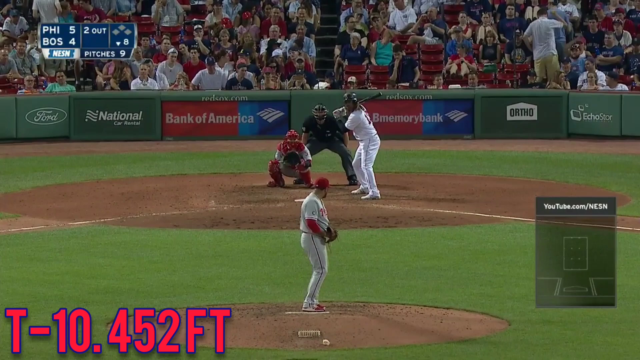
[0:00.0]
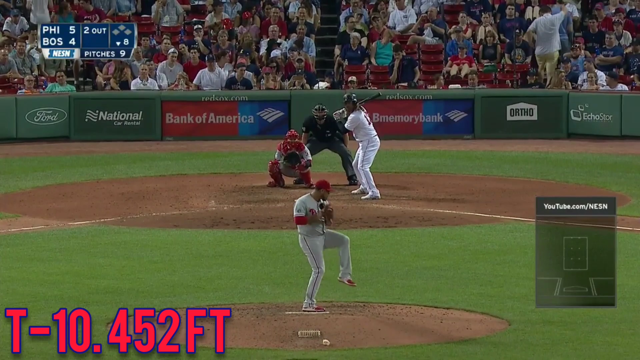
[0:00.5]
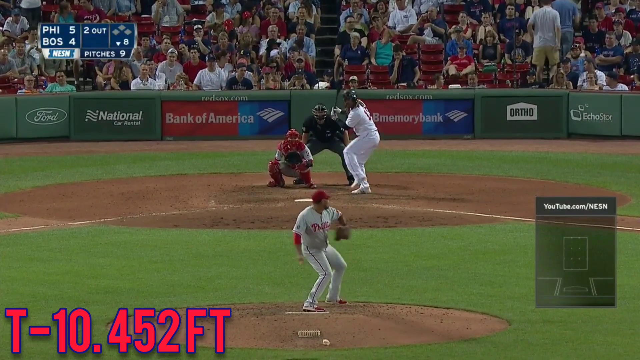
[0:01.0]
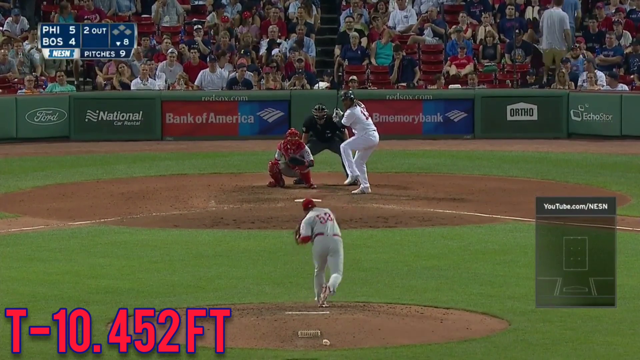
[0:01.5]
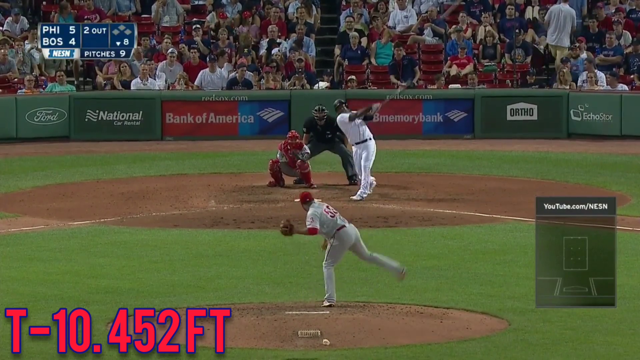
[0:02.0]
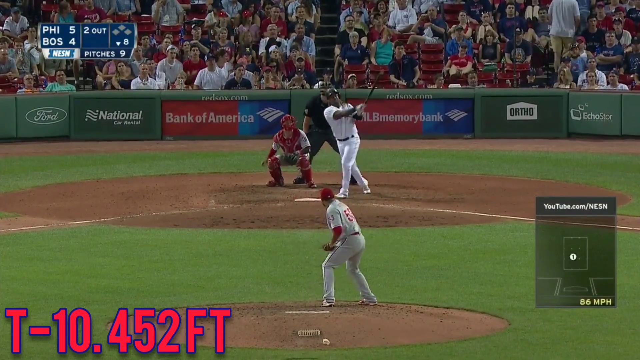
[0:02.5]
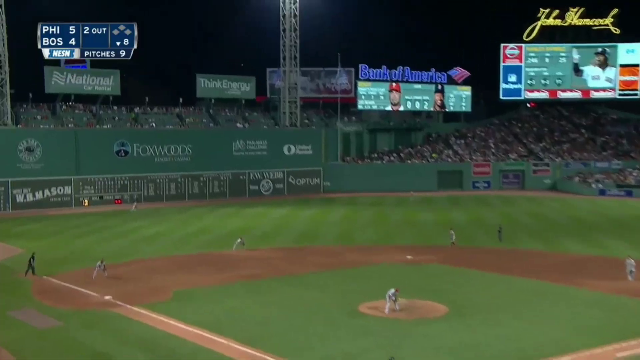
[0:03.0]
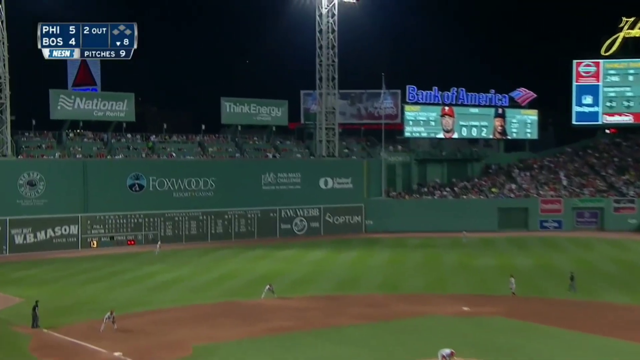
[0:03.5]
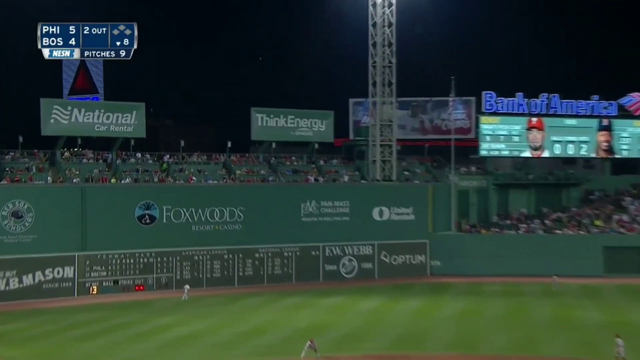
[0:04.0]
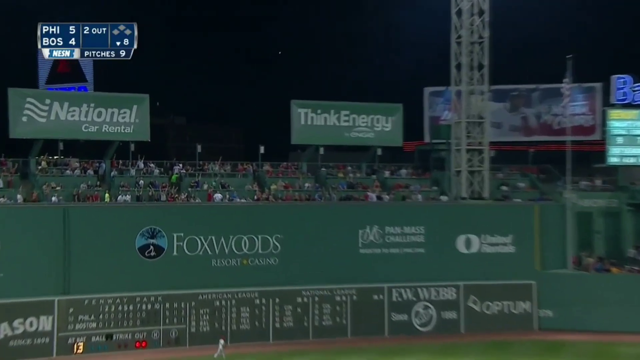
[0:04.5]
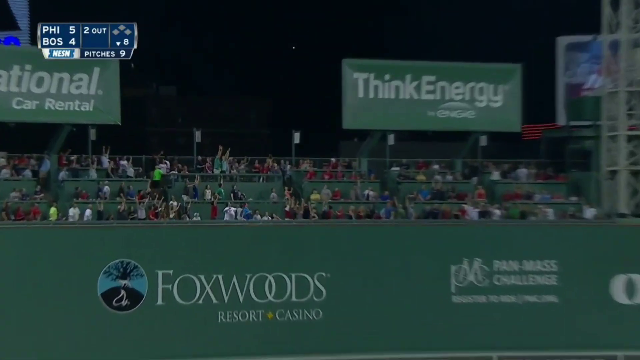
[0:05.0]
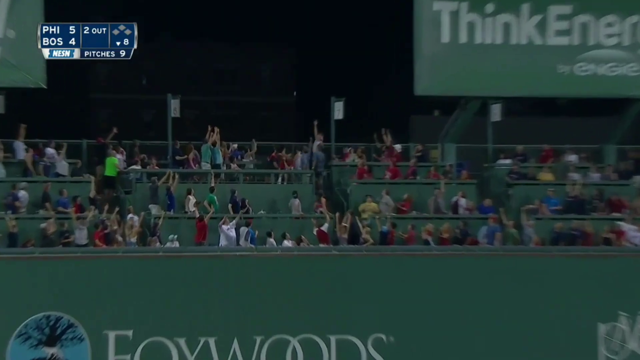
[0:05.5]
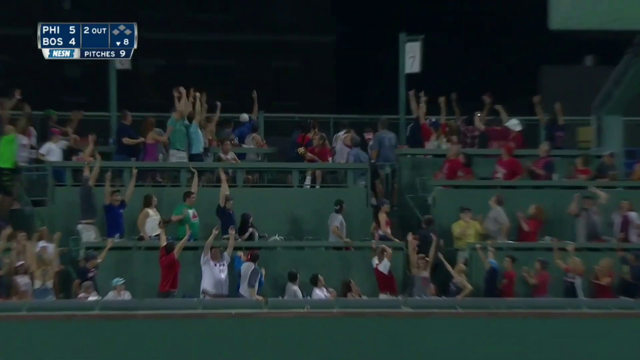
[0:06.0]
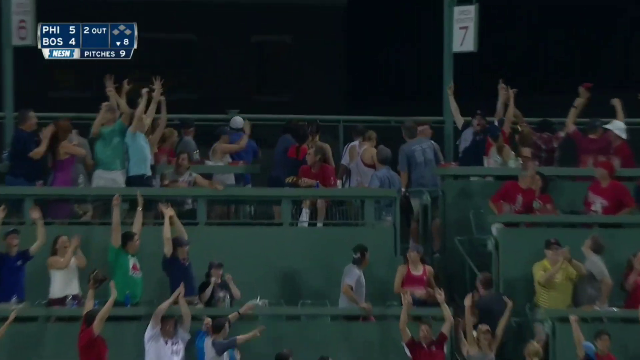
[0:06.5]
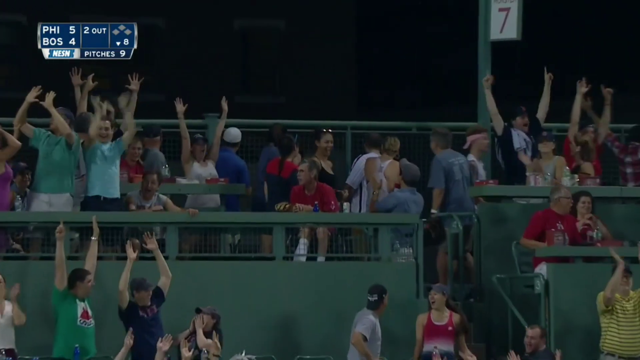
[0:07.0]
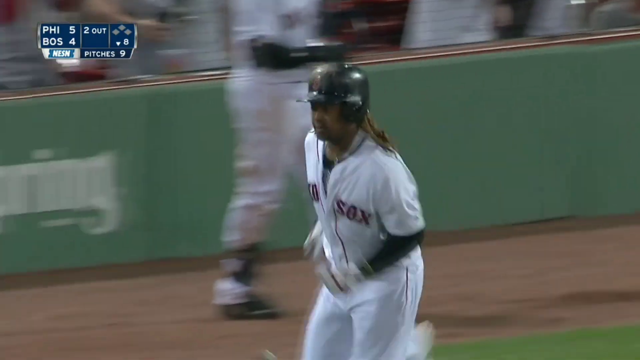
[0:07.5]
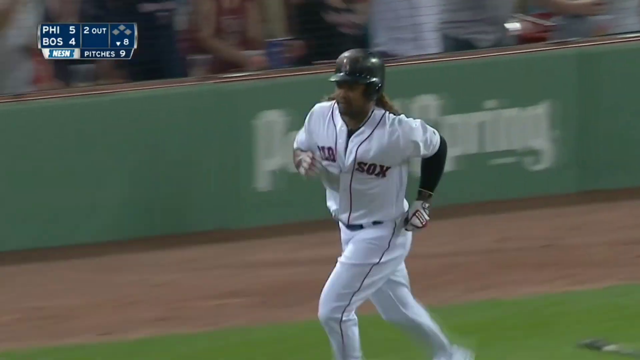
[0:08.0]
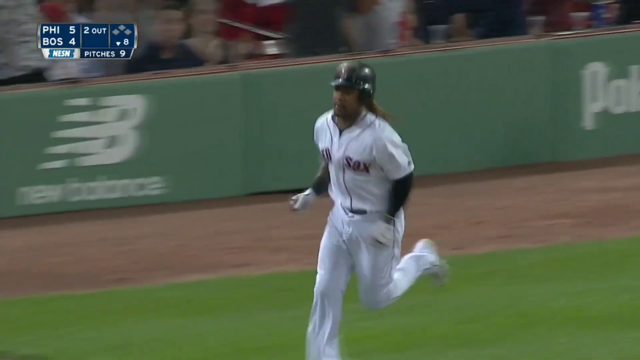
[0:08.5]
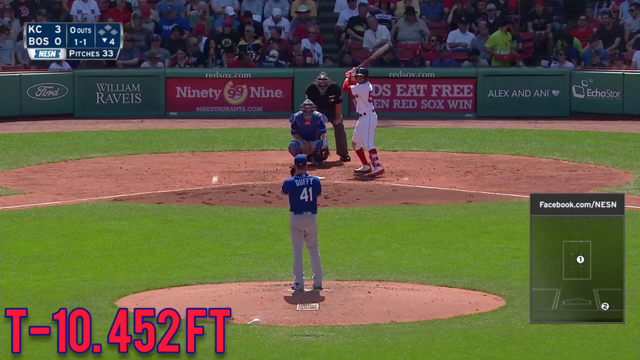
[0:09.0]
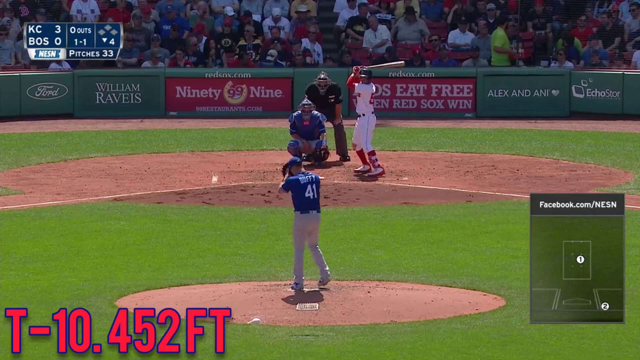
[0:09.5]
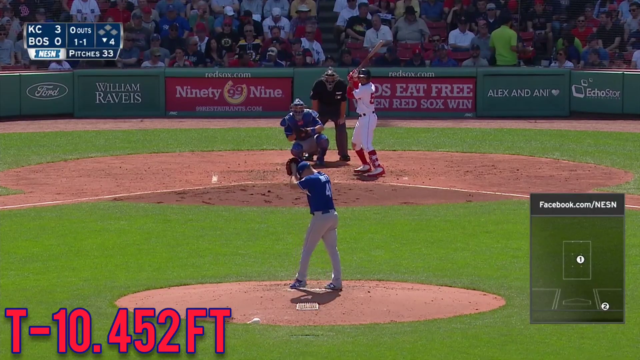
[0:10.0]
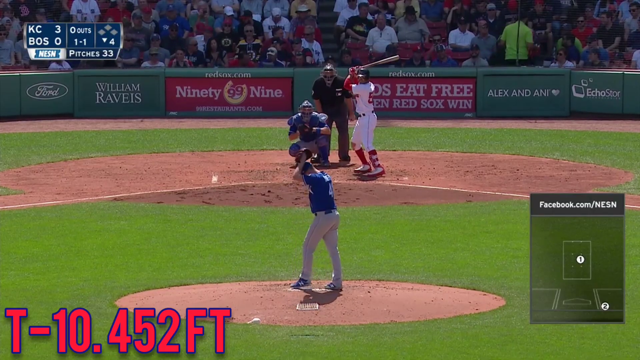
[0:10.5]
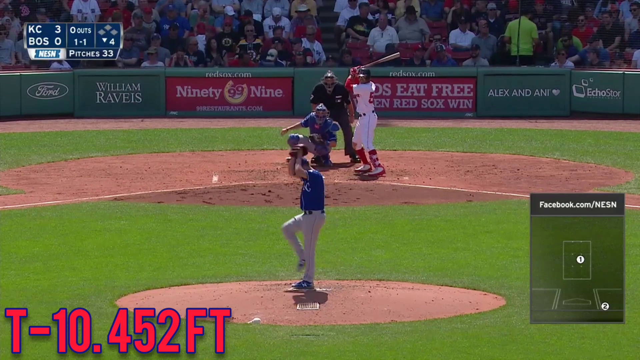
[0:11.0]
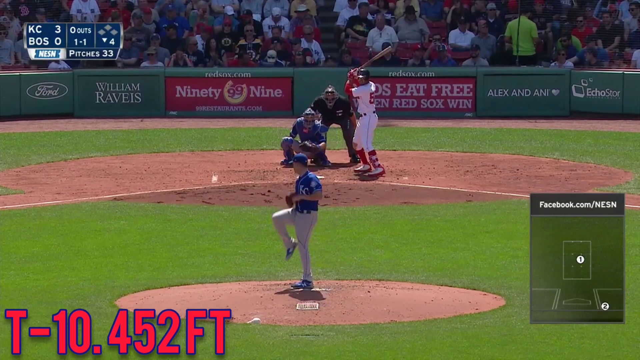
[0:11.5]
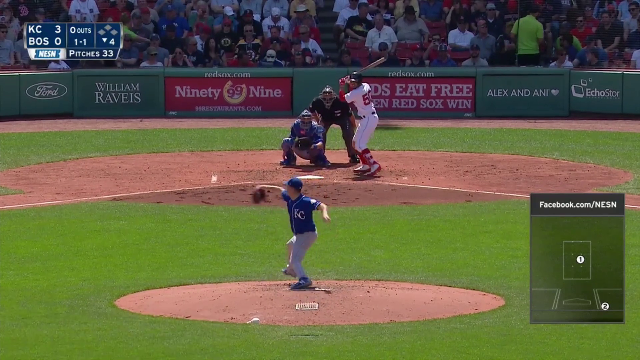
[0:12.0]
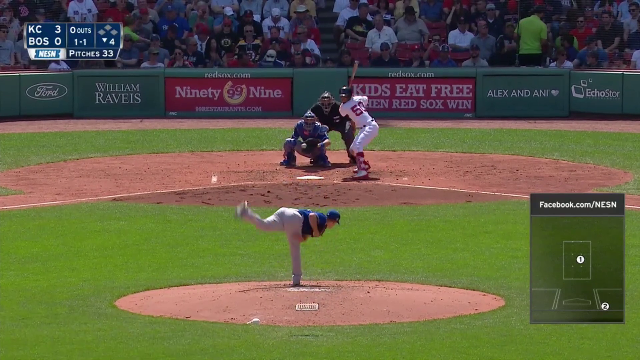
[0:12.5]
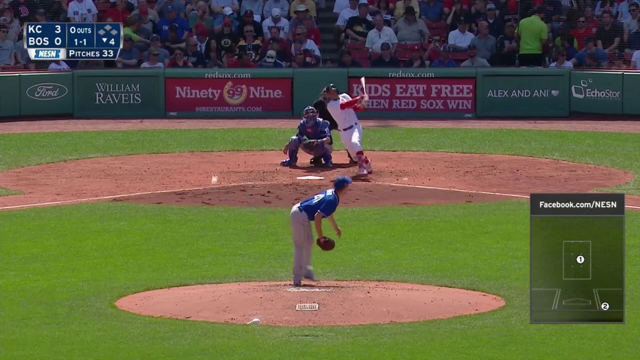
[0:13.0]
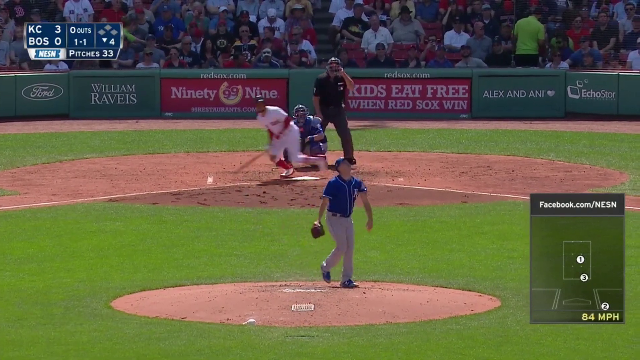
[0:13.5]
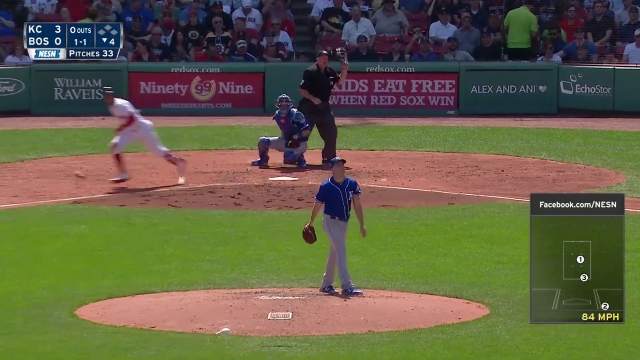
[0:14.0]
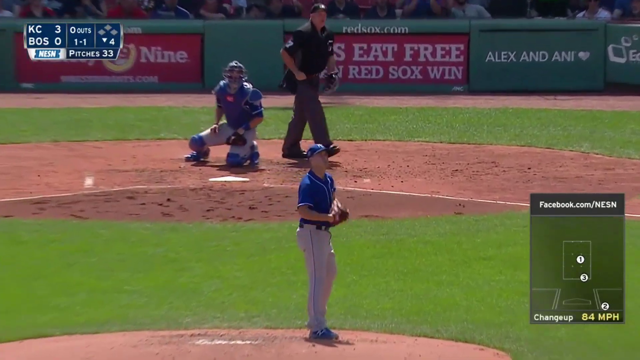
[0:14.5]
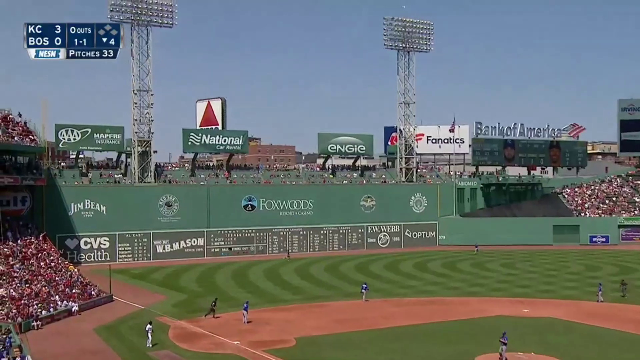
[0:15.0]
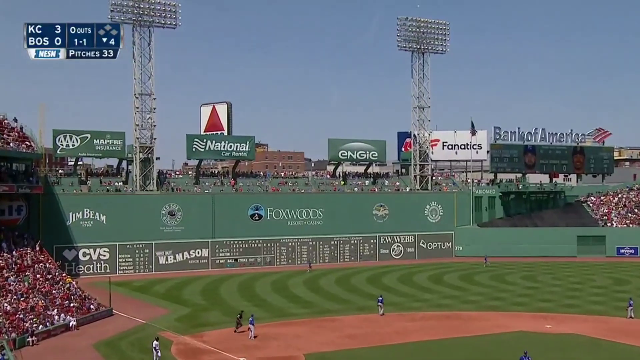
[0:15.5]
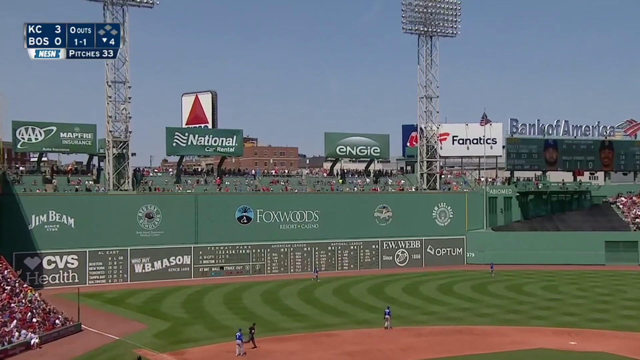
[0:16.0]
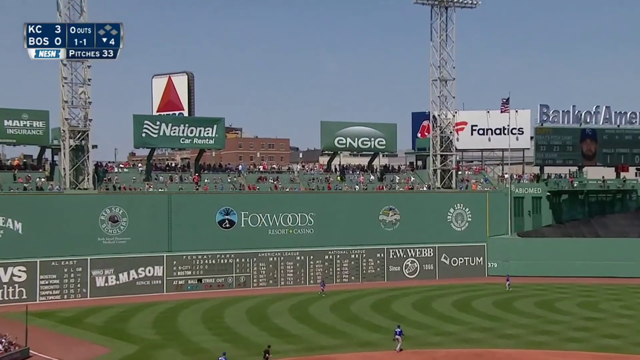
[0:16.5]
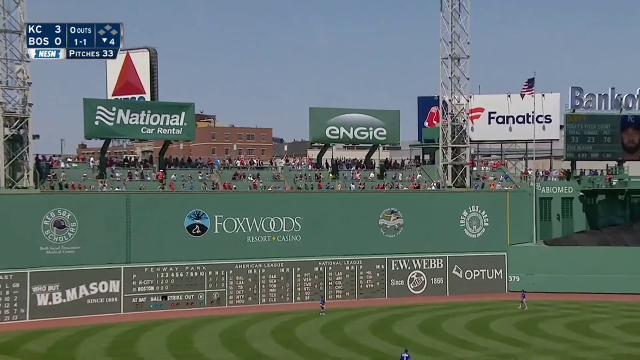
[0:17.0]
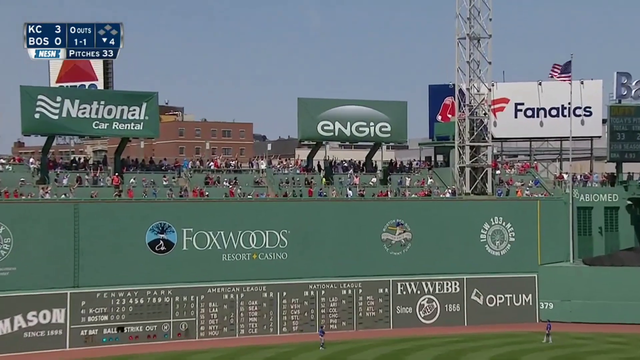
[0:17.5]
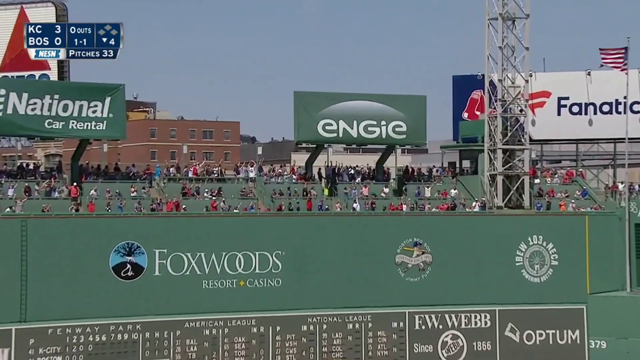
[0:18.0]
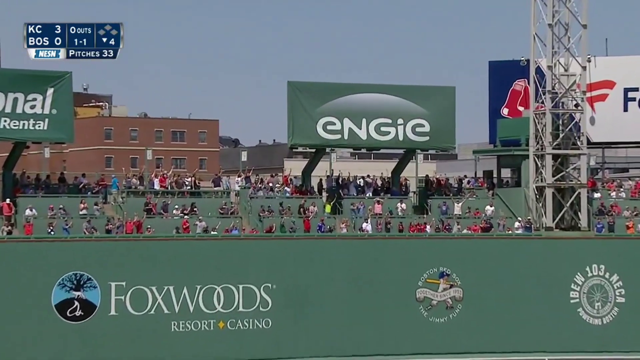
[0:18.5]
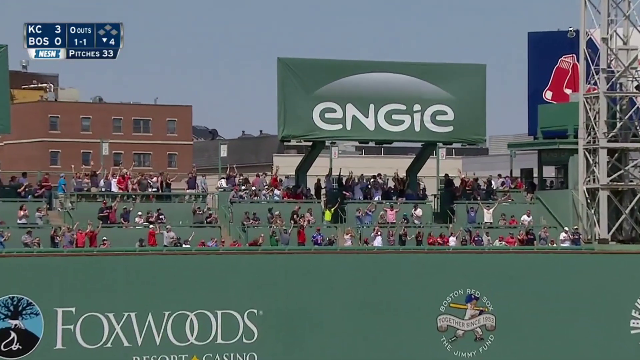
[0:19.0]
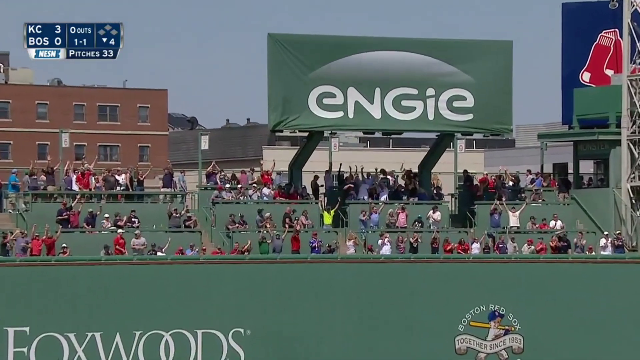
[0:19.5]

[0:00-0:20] The view is from the center field camera at a baseball game. A pitcher in a red-highlighted uniform for the Philadelphia Phillies is set and ready to pitch, and a right-handed batter stands at the plate. The stands in the background look full. Advertisements on the fence behind the umpire are for Ford, National Car Rental, Bank of America, Ortho, and Echo Star. It is the bottom of the eighth inning, and a Phillies relief pitcher who has thrown only nine pitches is in the game. The score is Phillies 5, Boston Red Sox 4, which suggests the ballpark is Fenway Park in Boston. The right-hander delivers, and the pitch is hit high into left center and goes over the Green Monster in left field for a home run by the Boston hitter. The scene then changes to the bottom of the fourth at Fenway, with the Red Sox playing the Kansas City Royals and losing 3-0. The count is one-one with no outs. The Royals' left-hander delivers a fastball that is hit hard into the outfield; the ball goes over the Green Monster, over the Foxwood sign, and over the Jim Bean sign in front of the National Car Rental and Citco signs, dropping into the left field seats under a cloudless blue sky. It is another home run over the Green Monster, this time against the visiting team.